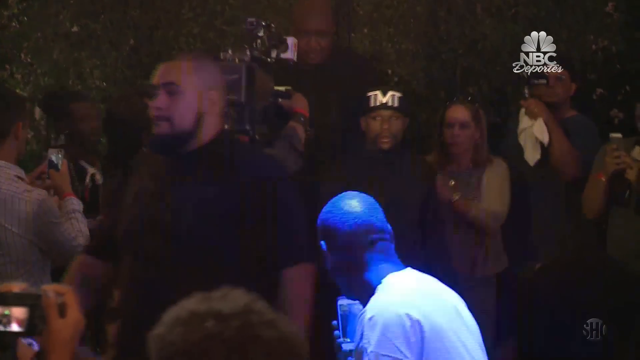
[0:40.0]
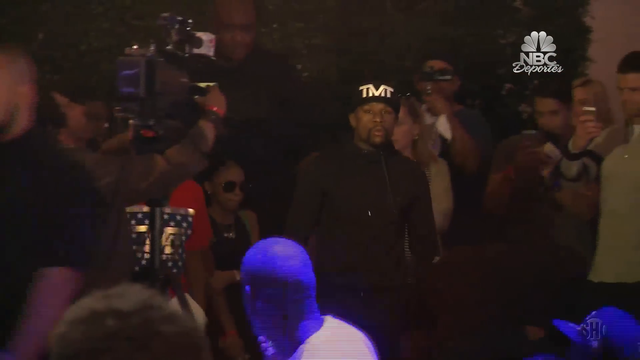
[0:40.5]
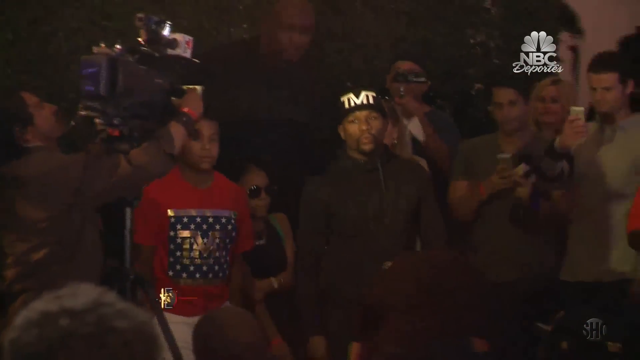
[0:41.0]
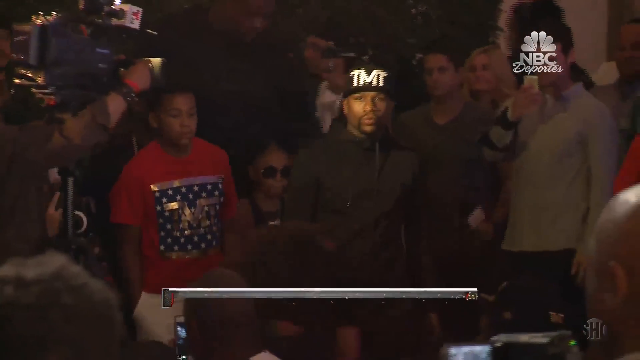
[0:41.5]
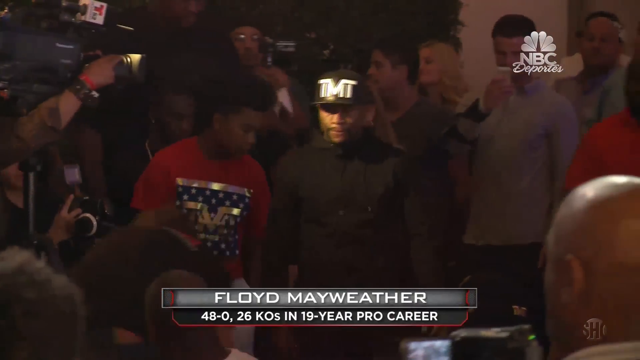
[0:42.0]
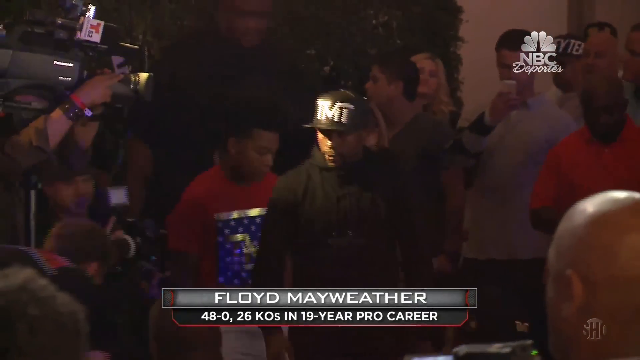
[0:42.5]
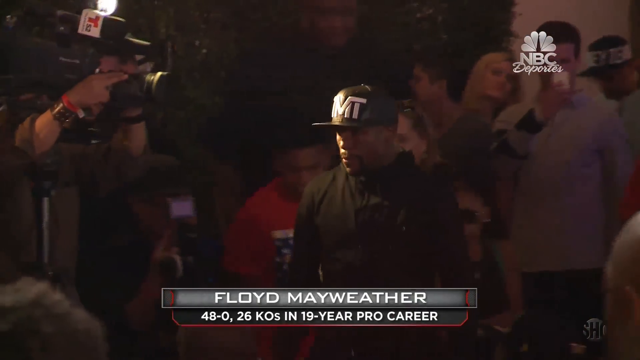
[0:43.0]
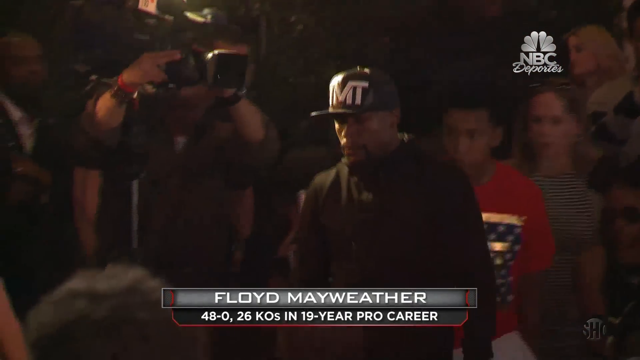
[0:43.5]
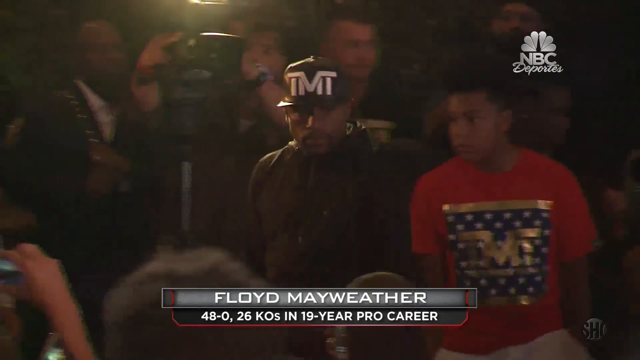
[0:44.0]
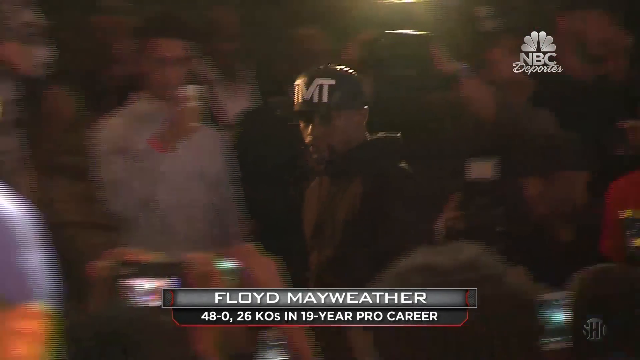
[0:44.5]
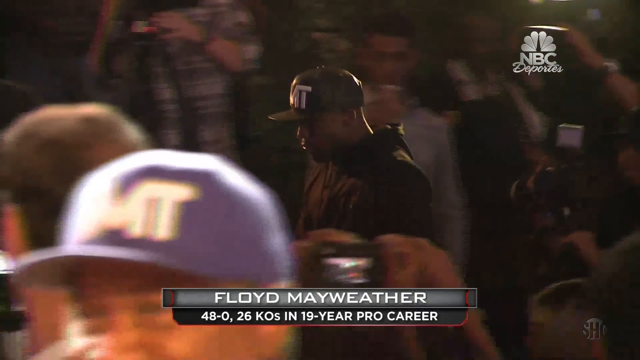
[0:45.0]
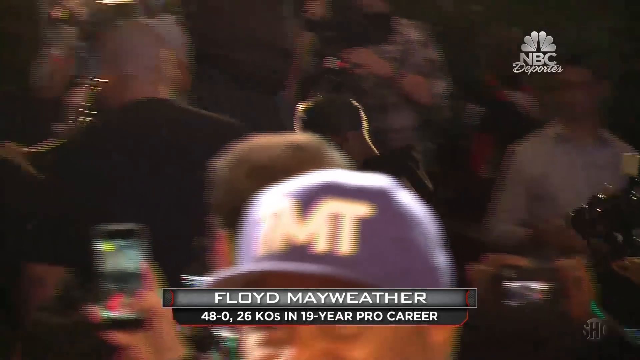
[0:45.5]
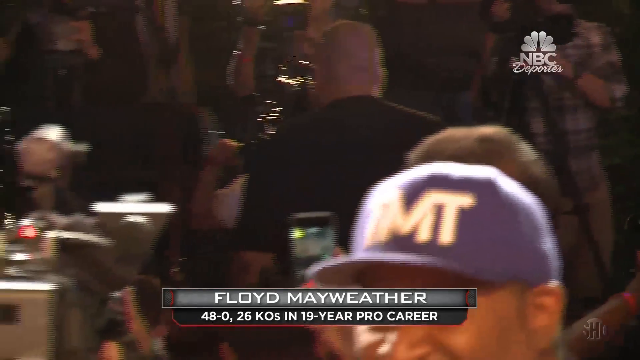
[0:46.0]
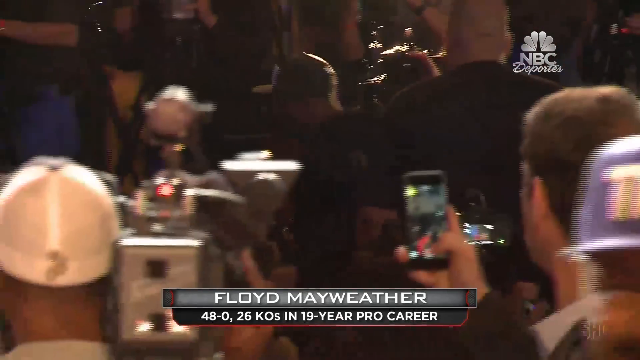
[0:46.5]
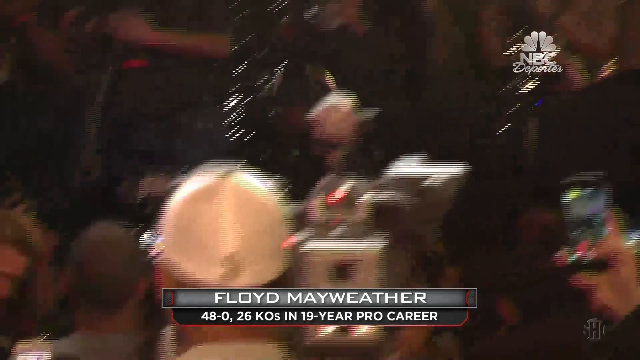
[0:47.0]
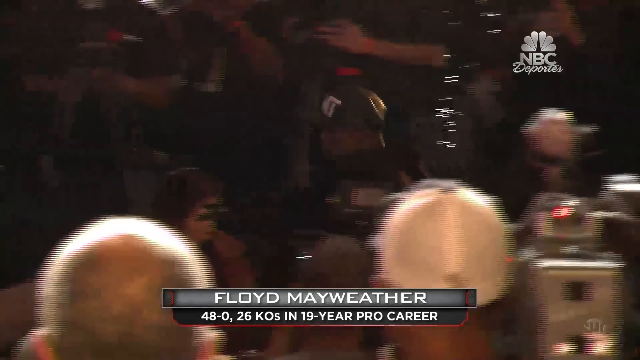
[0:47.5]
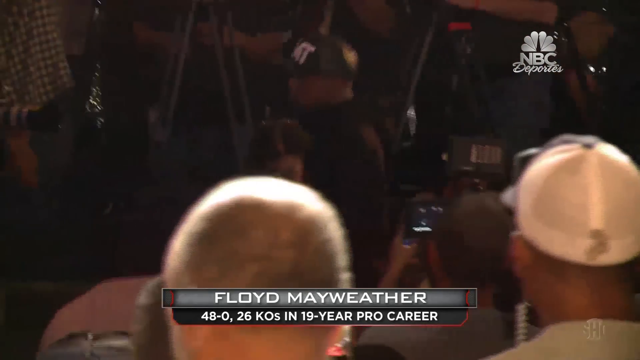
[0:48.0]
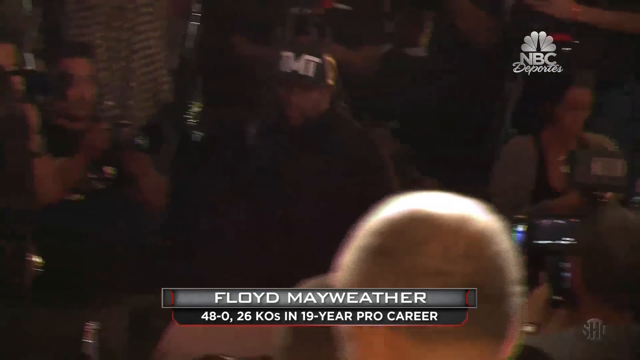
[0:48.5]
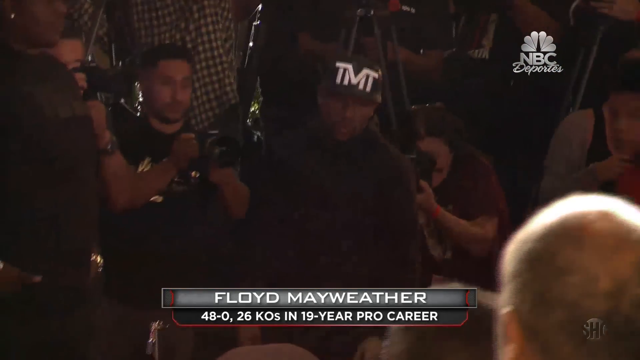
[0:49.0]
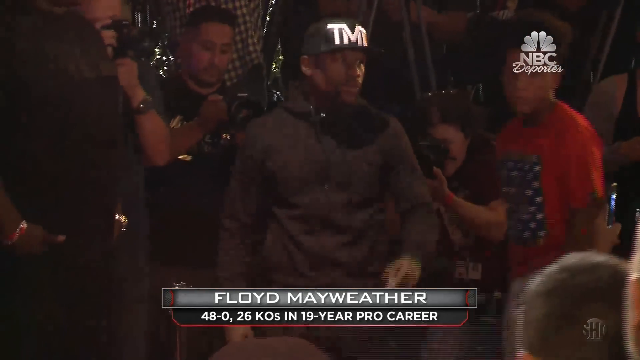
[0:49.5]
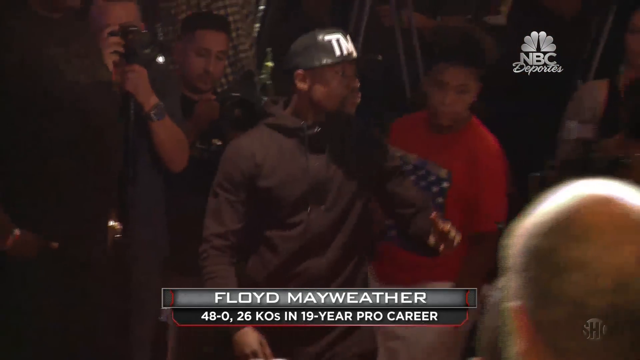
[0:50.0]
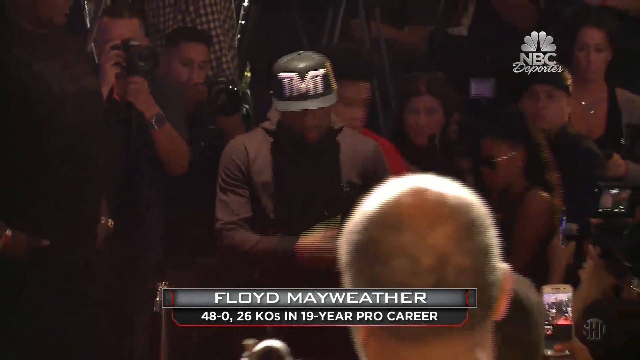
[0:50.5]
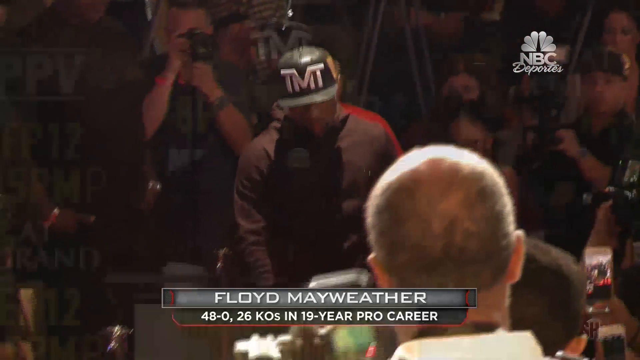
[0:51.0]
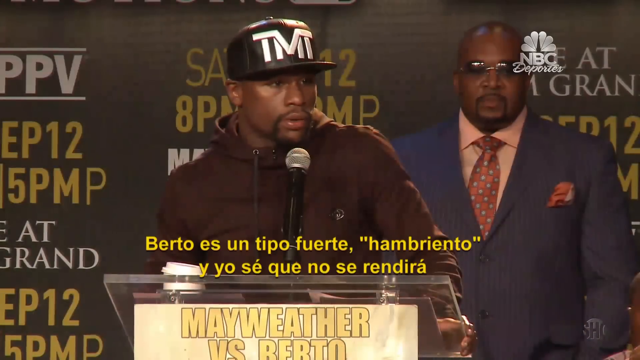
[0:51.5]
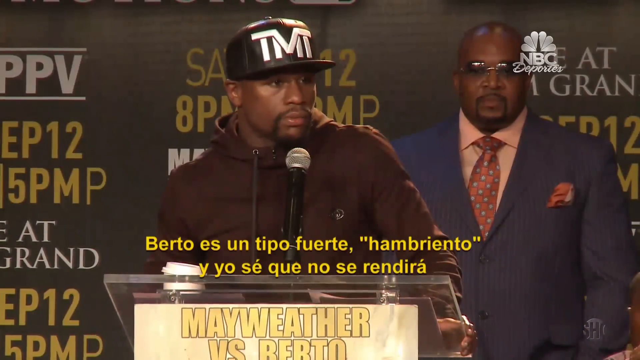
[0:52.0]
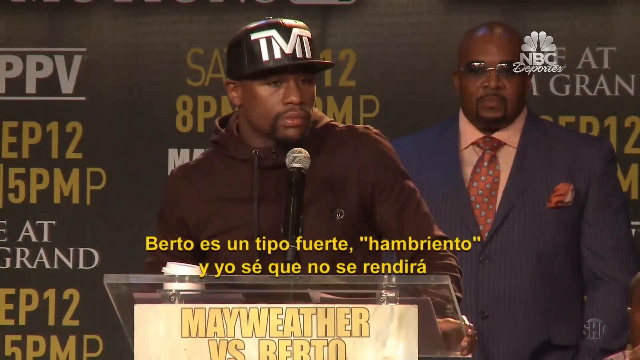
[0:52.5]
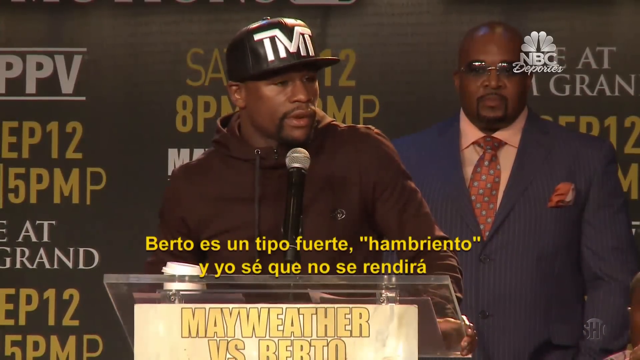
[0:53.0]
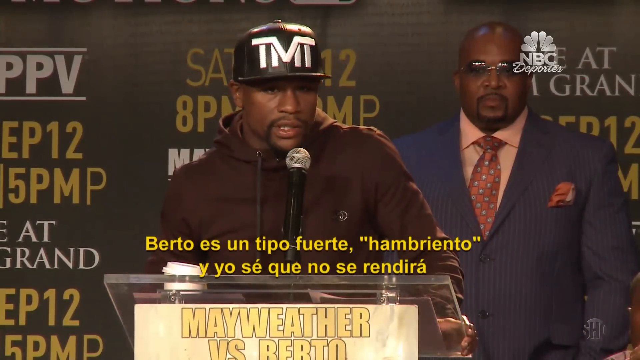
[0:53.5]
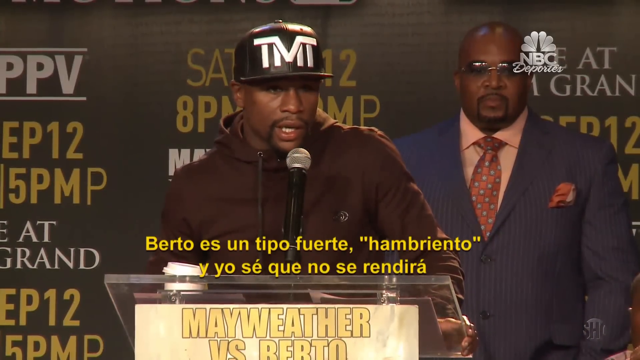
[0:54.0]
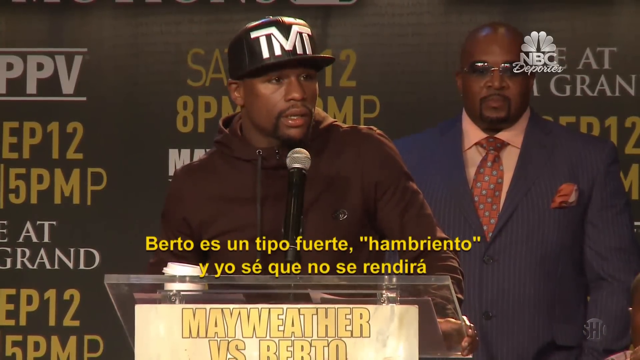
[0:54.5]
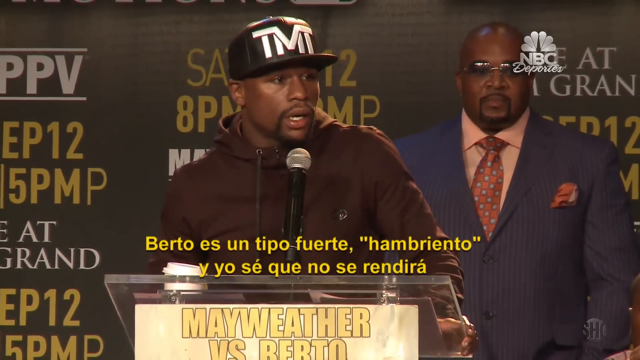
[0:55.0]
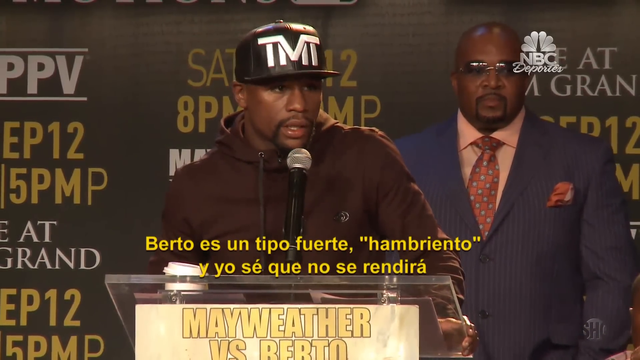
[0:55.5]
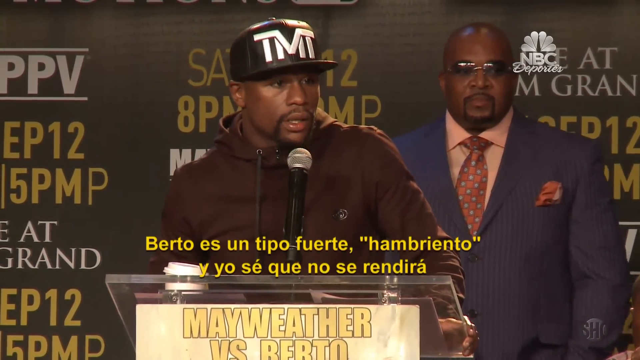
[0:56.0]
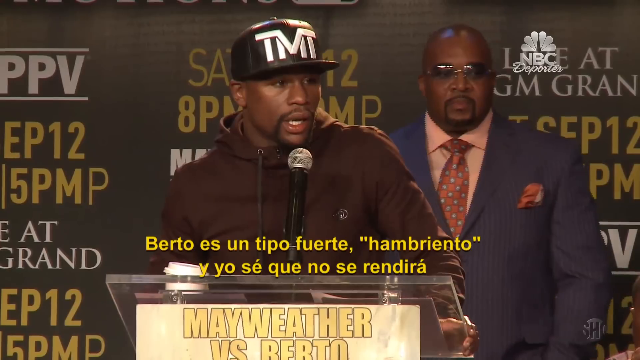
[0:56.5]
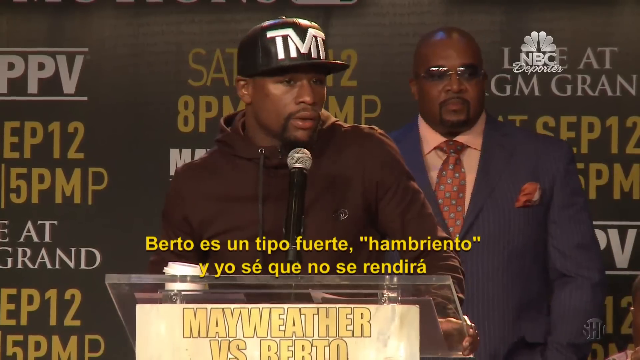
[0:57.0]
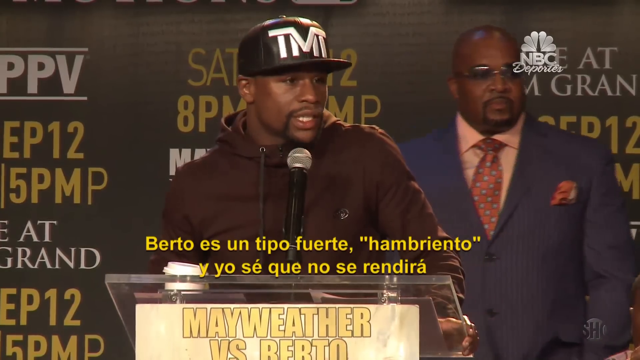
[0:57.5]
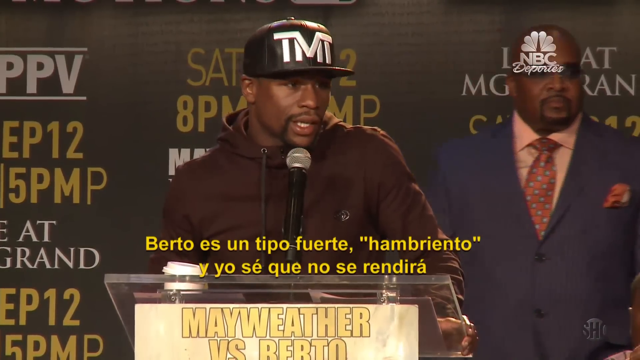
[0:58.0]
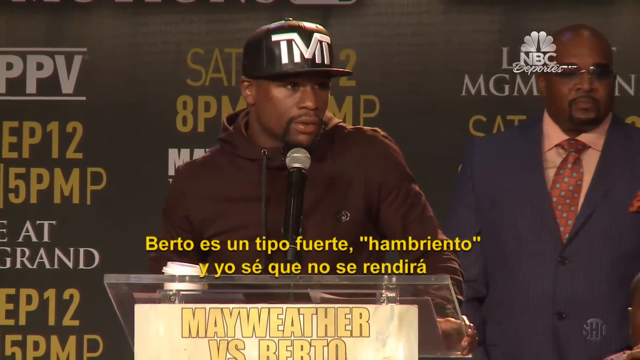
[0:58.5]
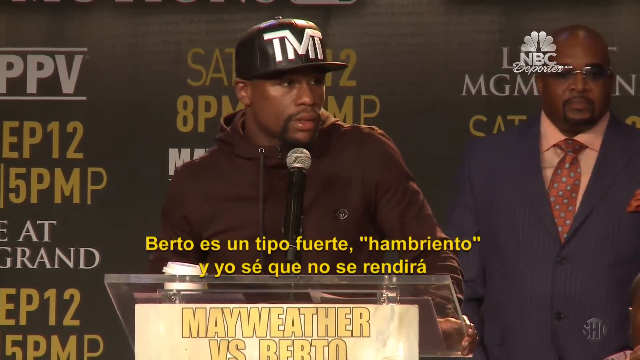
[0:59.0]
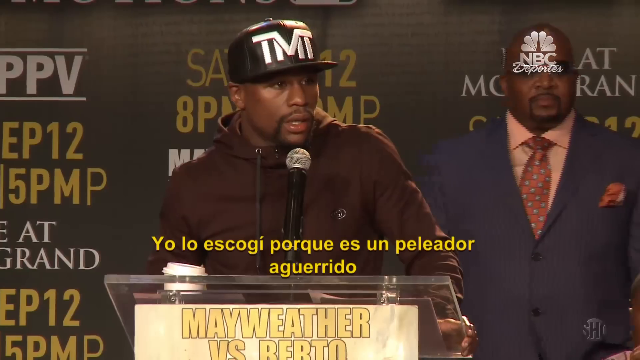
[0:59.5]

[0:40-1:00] Floyd Mayweather walks down the aisle to the stage. He first walks toward the camera, then turns slightly to his right so his left side is visible, and as he walks toward the stage his front is seen. The video transitions to Floyd Mayweather standing at a podium, speaking into a microphone. Wording underneath him appears to translate what he is saying into Spanish. His body faces the camera while his head is slightly turned to his left. As he speaks, he slowly drops his head and brings it back up. A man behind him sways kind of to the left and right.